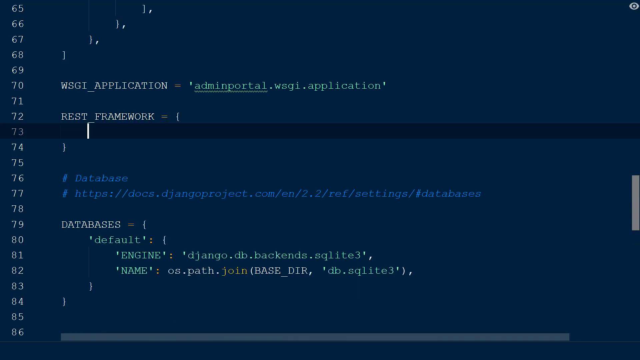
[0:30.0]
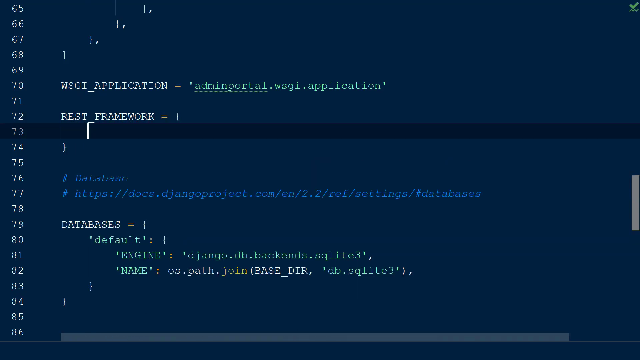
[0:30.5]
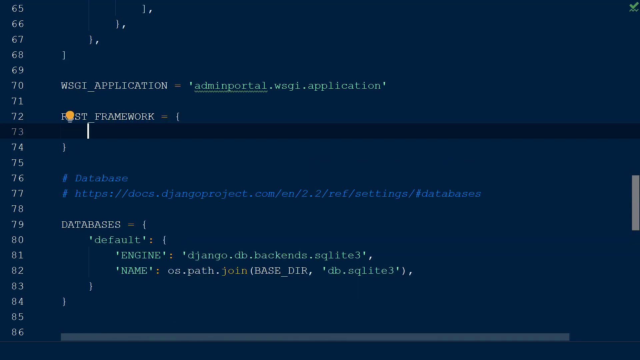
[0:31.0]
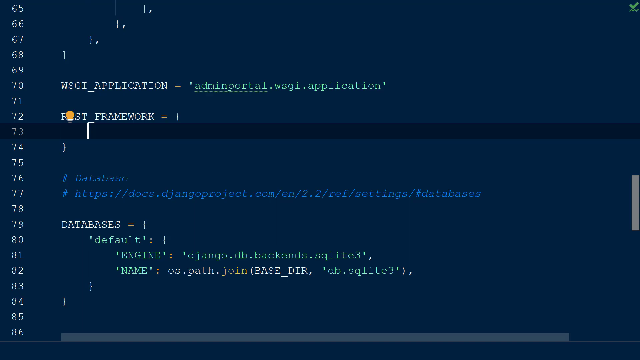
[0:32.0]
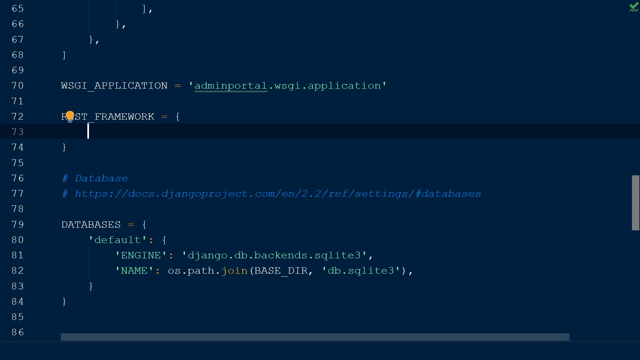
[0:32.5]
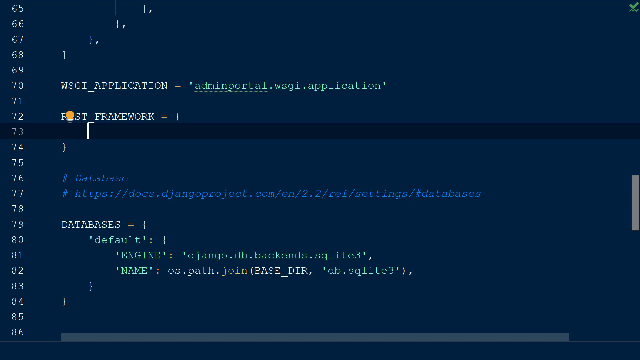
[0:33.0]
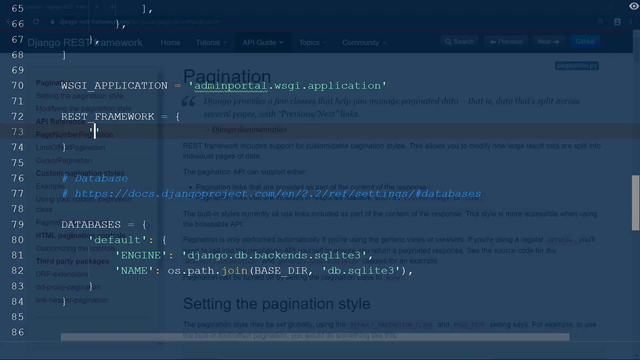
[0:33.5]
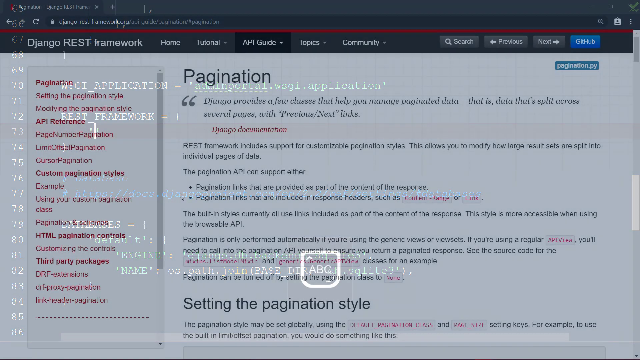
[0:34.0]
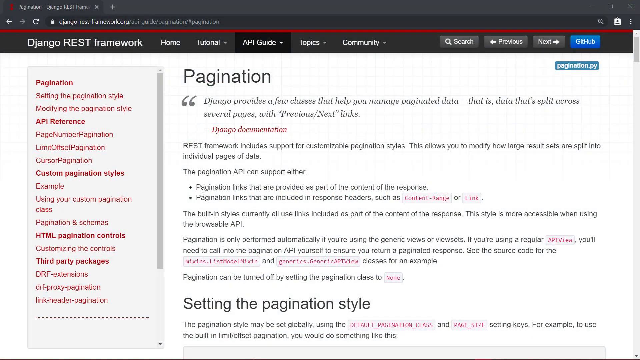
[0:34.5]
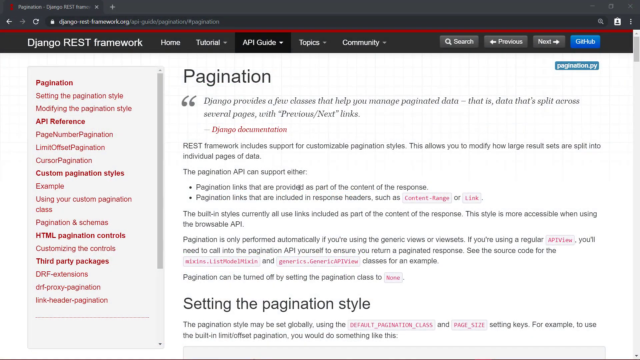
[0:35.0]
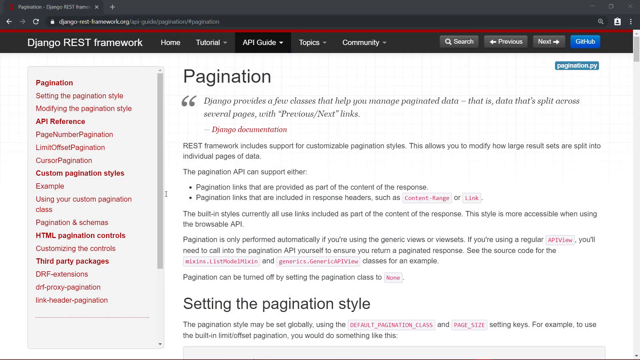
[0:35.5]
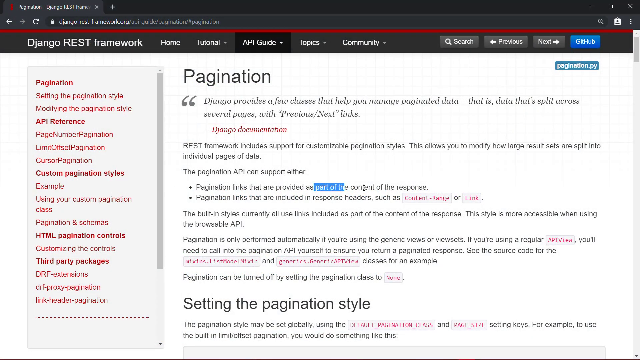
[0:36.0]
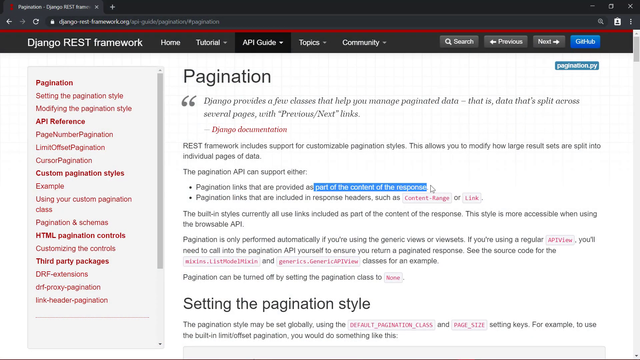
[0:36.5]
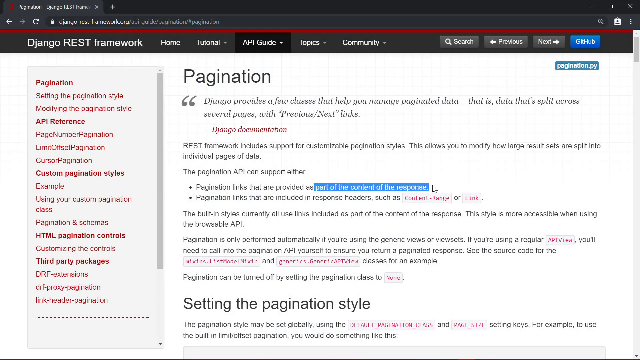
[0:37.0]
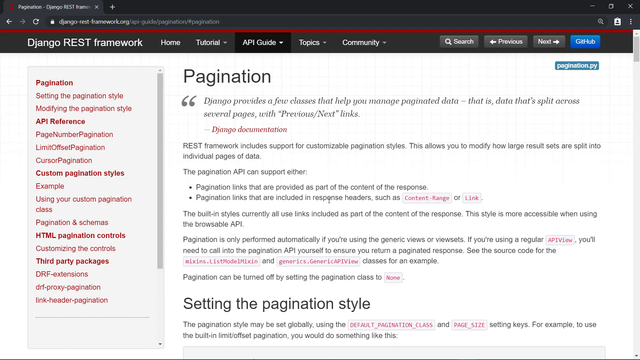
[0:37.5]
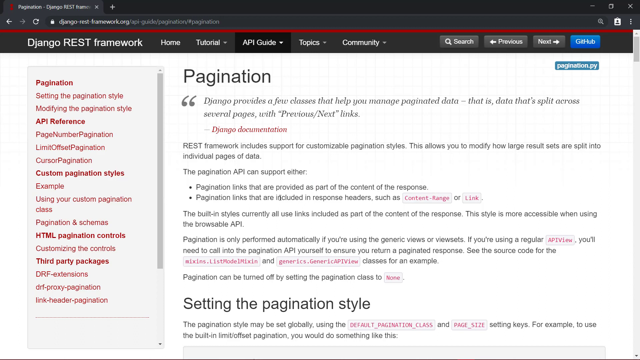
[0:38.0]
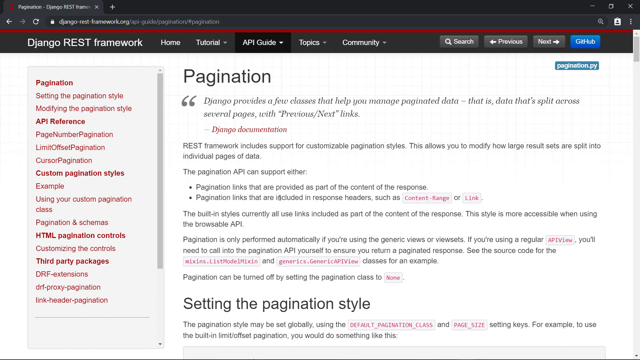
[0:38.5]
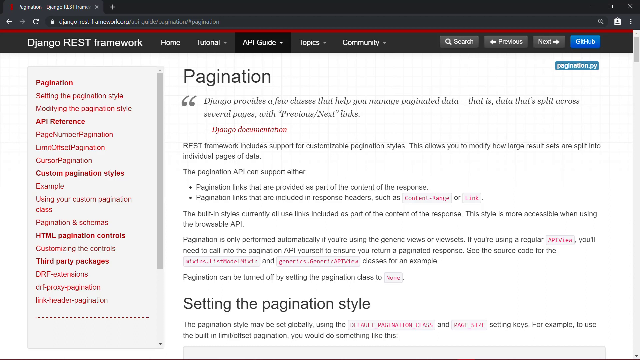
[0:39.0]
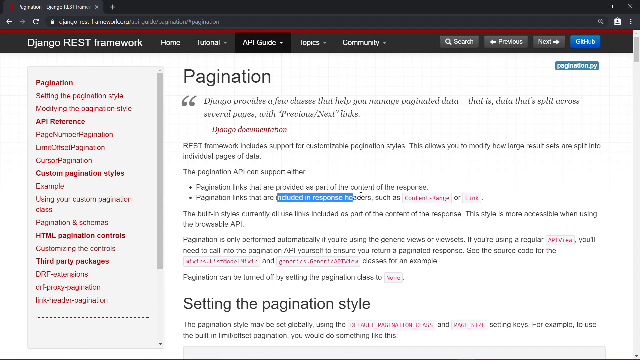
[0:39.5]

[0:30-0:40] The display switches to a different window showing the Django REST framework documentation. The page has home, tutorial, API guide, topics and community sections, a search button, and previous and next buttons. Under API guide is a Pagination page with a block of text reading "Django provides a few classes that help you manage paginated data. That is data that splits across several pages with previous or next link." This is the Django documentation.